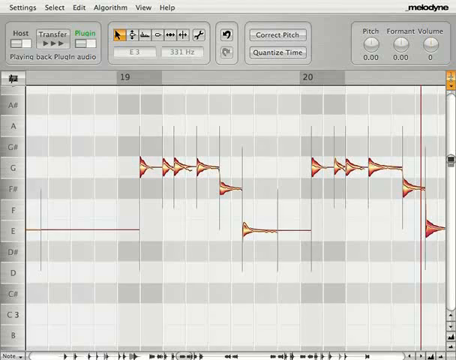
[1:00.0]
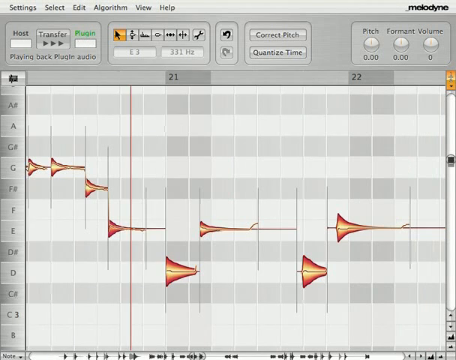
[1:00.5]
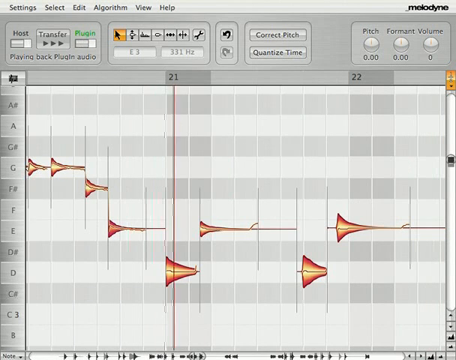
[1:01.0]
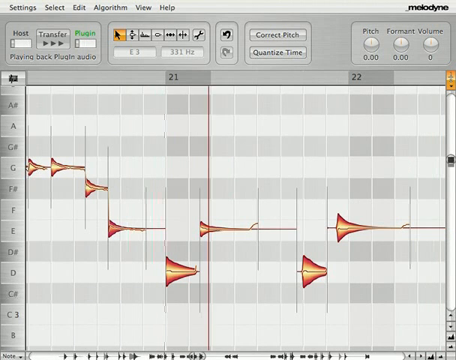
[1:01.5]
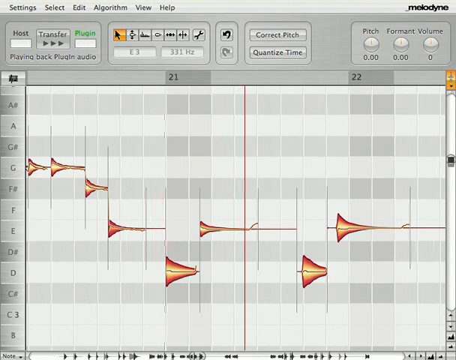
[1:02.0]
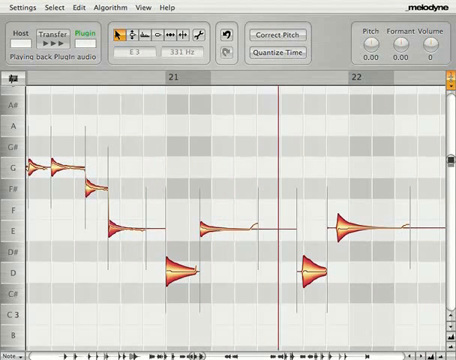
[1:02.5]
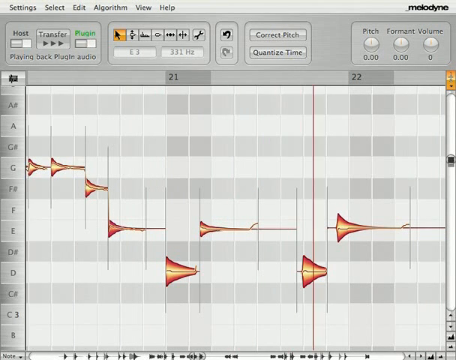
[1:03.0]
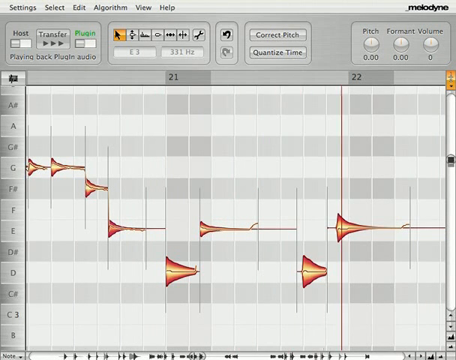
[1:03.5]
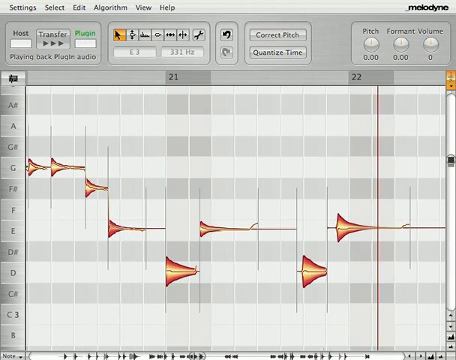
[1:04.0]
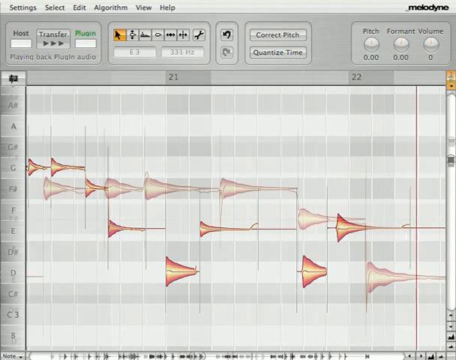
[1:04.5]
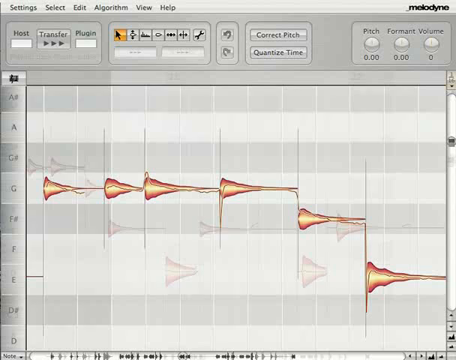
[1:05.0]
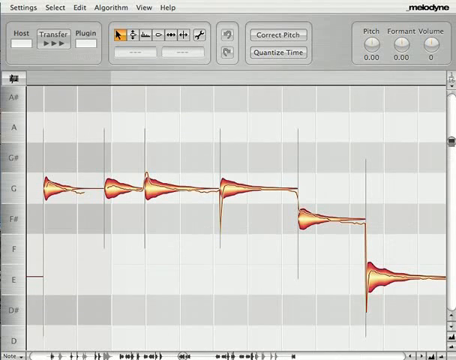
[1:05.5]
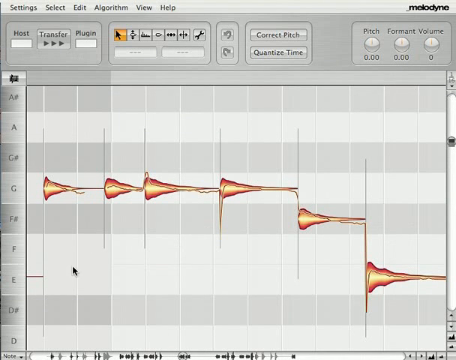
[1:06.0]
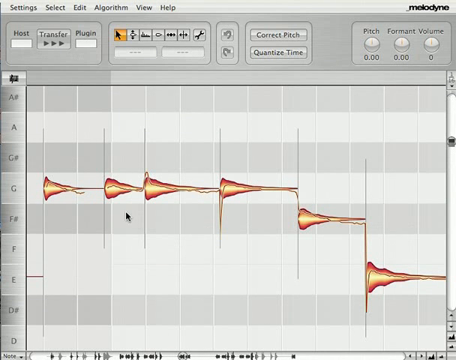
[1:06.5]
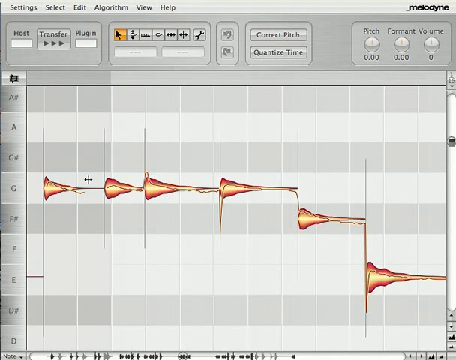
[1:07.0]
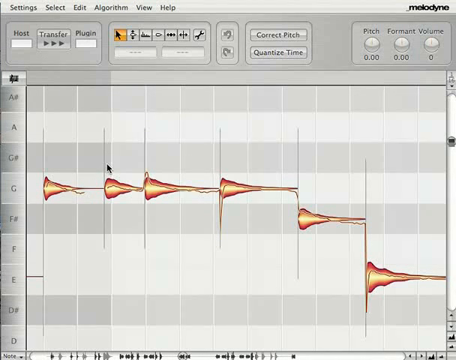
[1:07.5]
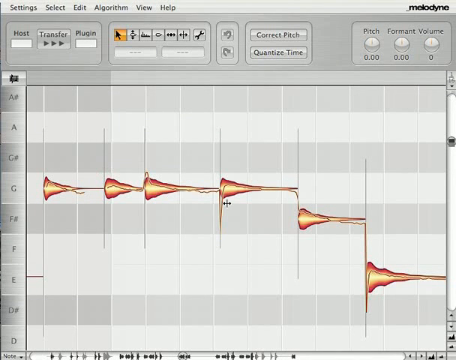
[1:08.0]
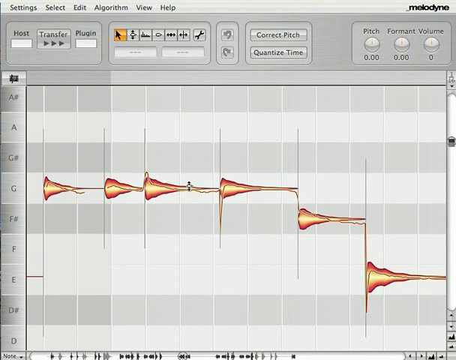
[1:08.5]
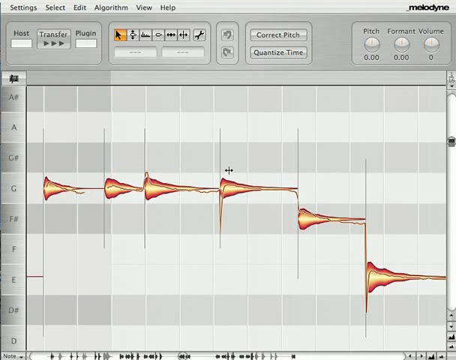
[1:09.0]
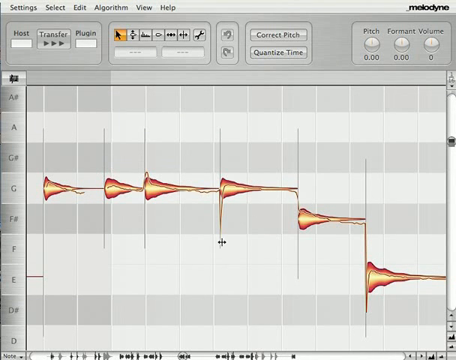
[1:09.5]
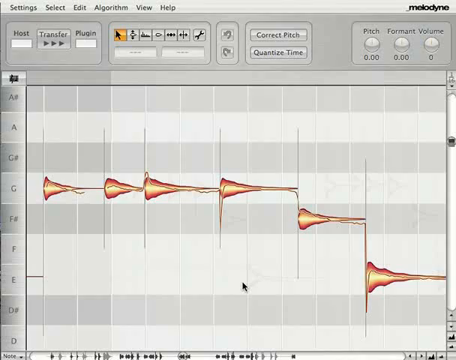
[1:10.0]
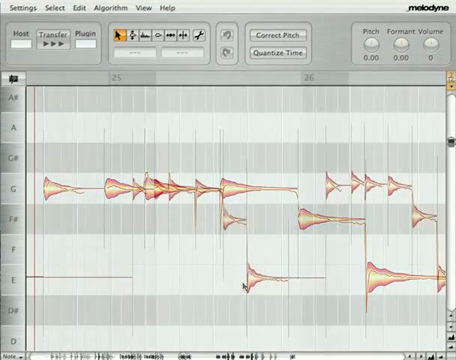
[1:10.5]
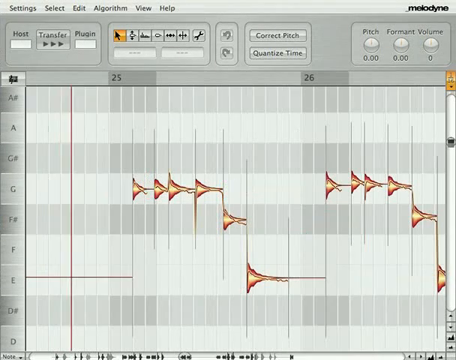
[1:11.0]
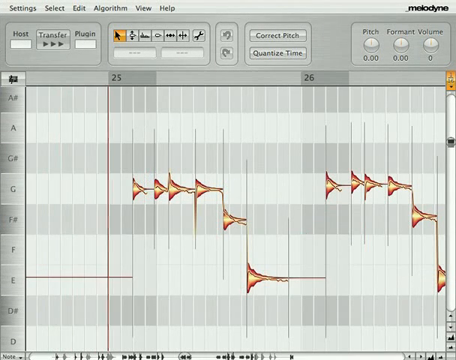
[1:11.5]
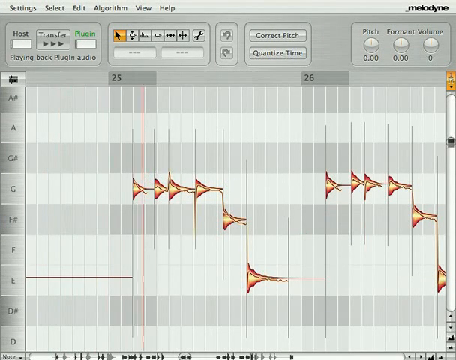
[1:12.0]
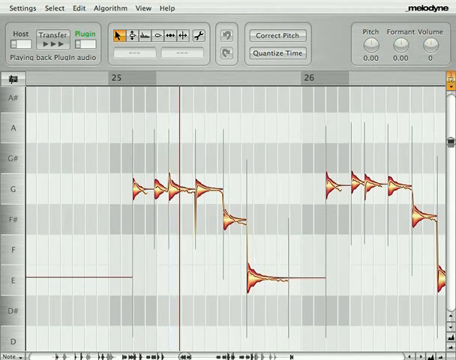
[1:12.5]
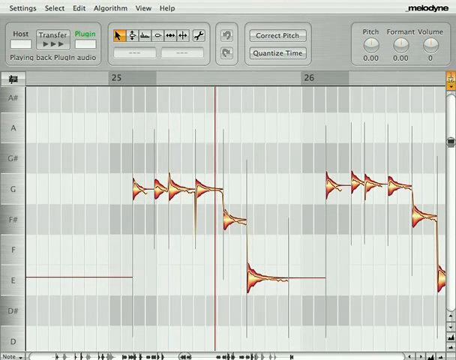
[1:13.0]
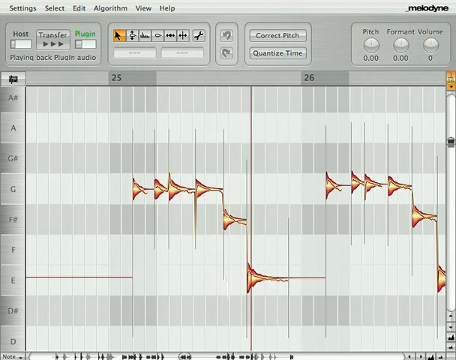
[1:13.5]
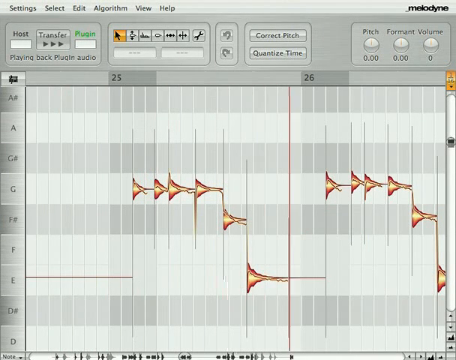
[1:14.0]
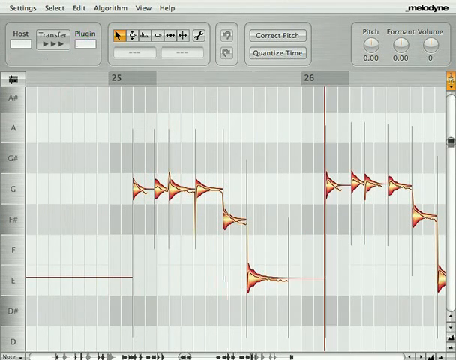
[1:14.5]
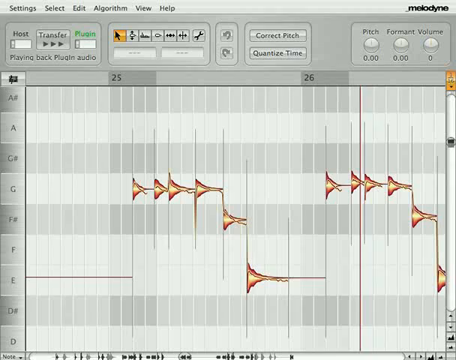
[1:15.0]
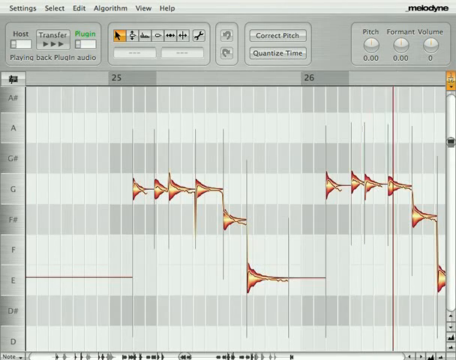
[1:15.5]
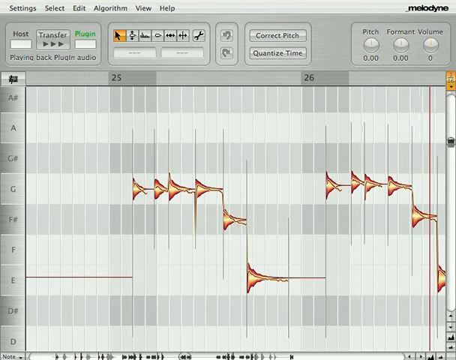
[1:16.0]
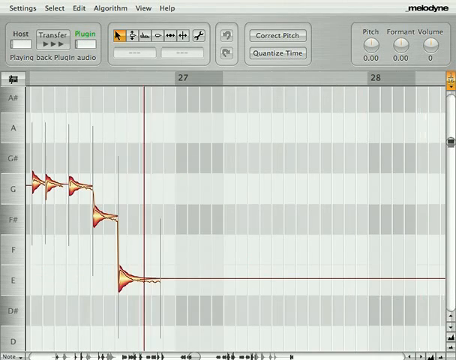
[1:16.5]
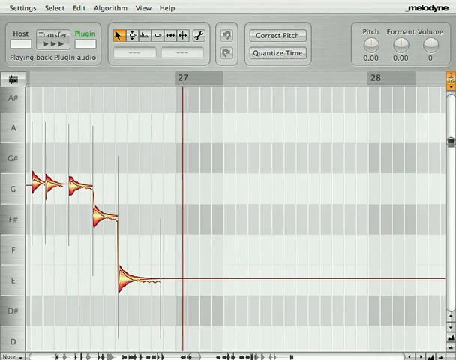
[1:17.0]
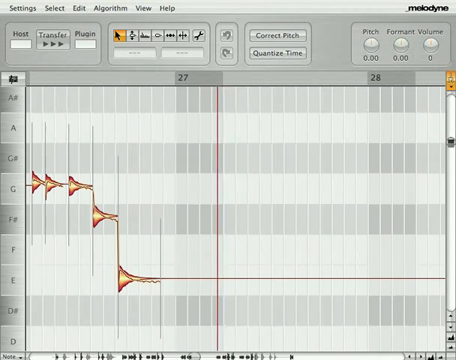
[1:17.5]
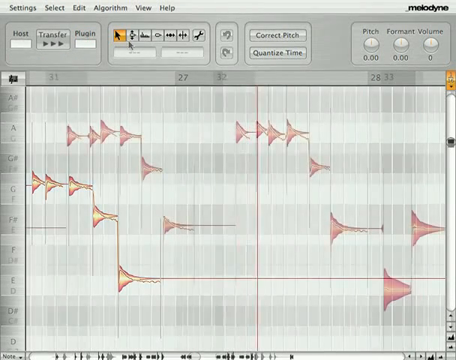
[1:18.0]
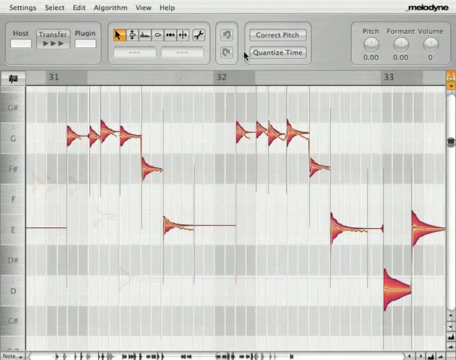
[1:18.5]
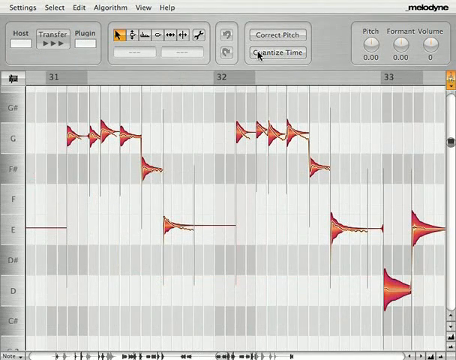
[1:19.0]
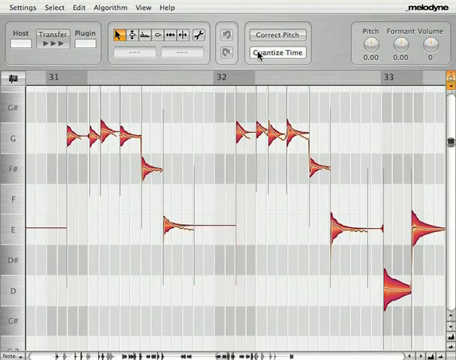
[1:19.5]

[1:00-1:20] The demonstrator plays the adjusted music, reaching the 22nd second. A couple of notes are highlighted and jagged lines appear on them. Some notes are red and some are yellow. The playback passes the 28th second and reaches the 33rd second, when the demonstrator clicks the quantize time button.